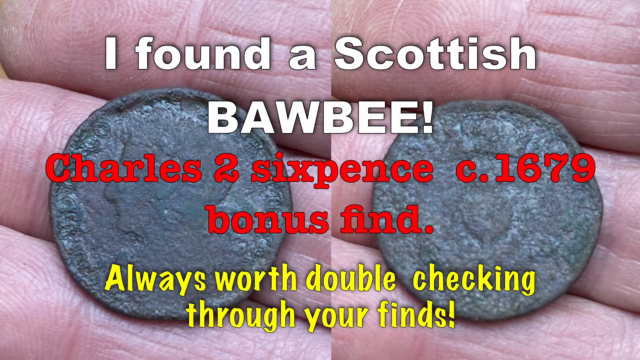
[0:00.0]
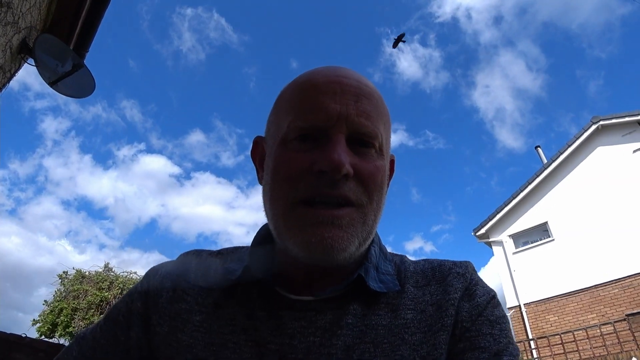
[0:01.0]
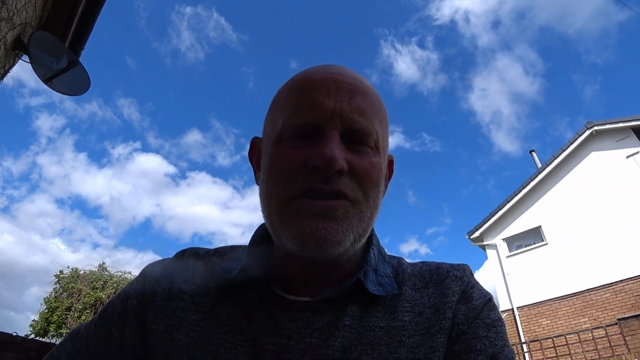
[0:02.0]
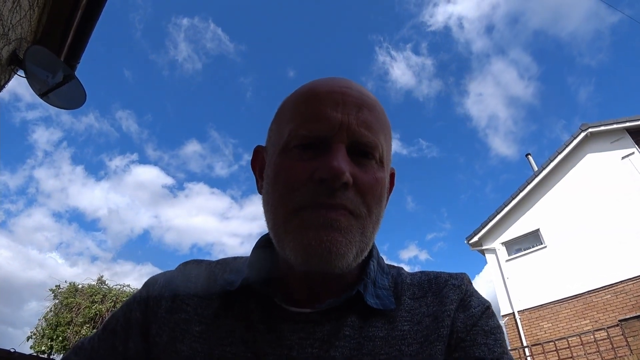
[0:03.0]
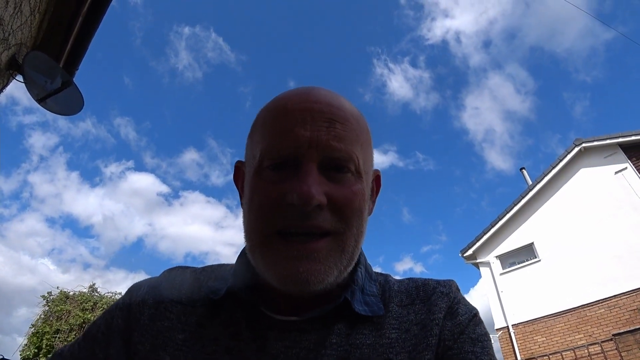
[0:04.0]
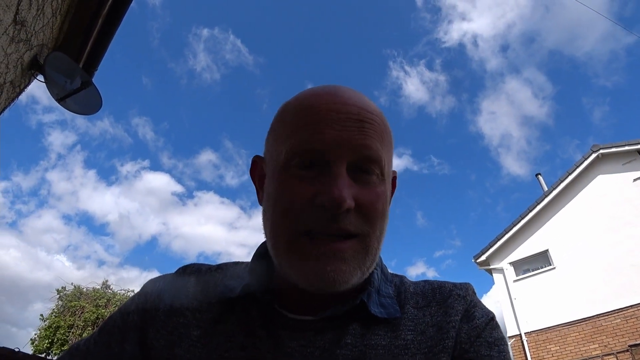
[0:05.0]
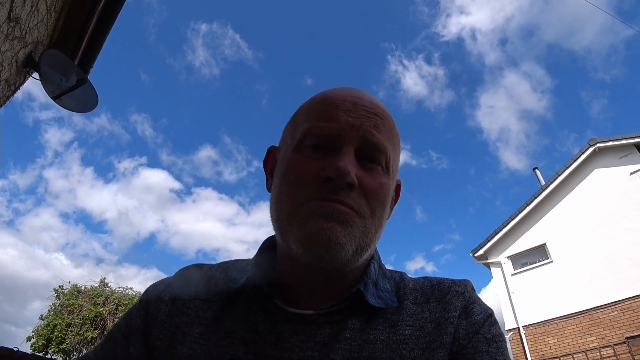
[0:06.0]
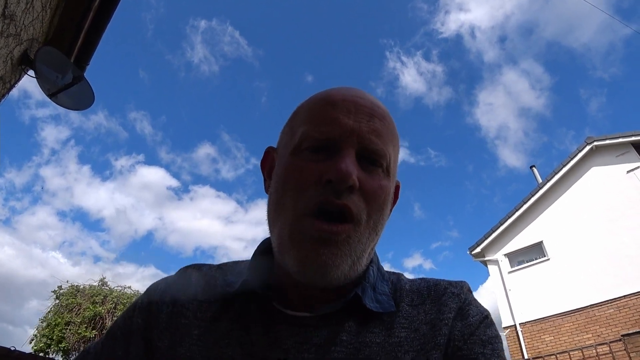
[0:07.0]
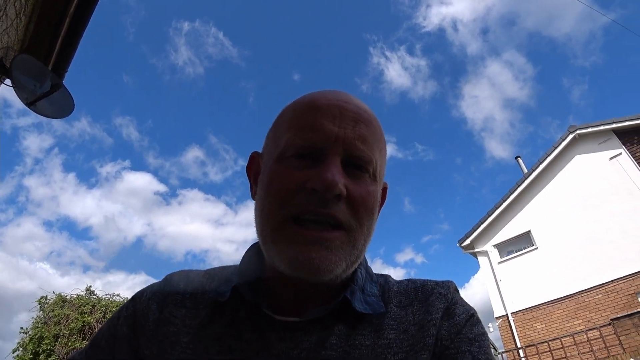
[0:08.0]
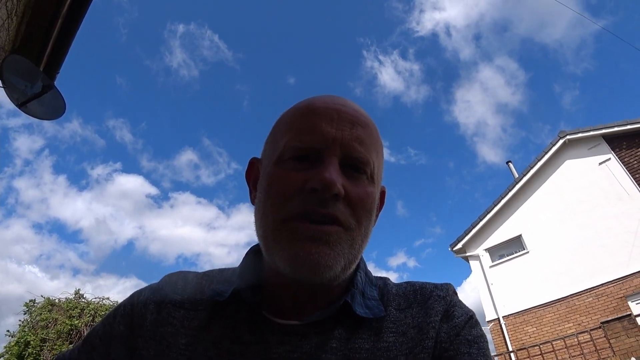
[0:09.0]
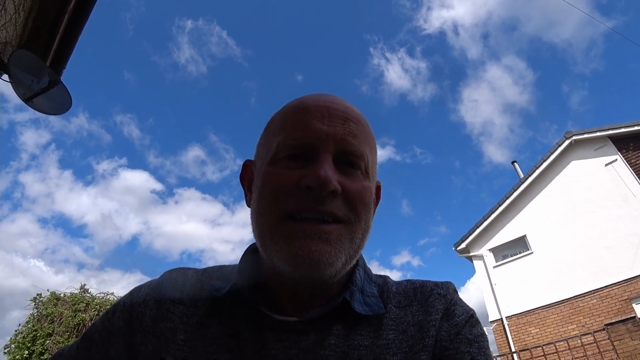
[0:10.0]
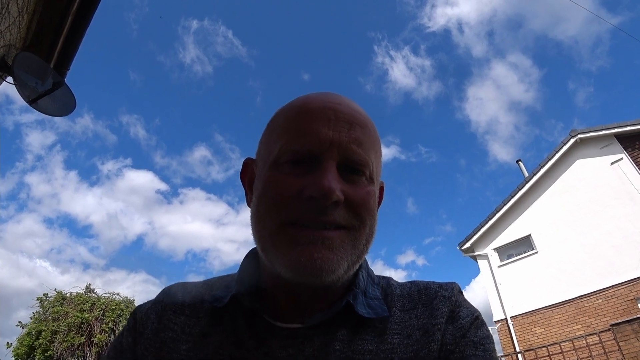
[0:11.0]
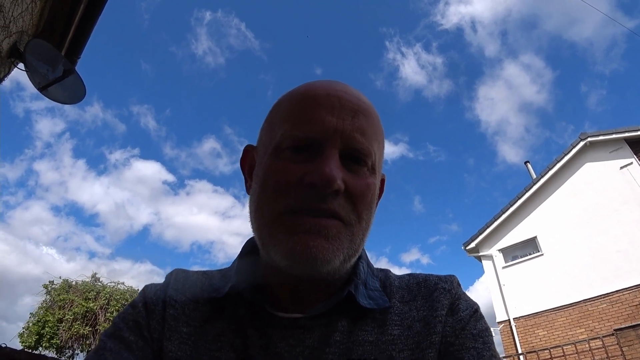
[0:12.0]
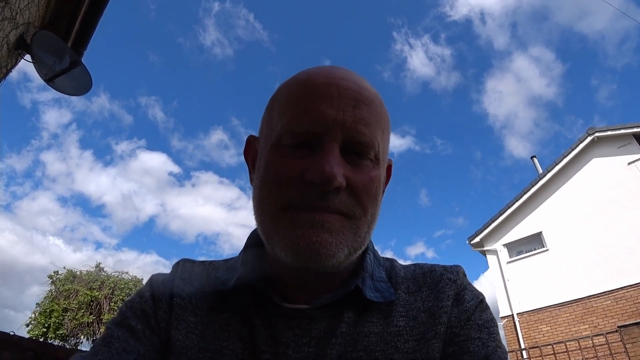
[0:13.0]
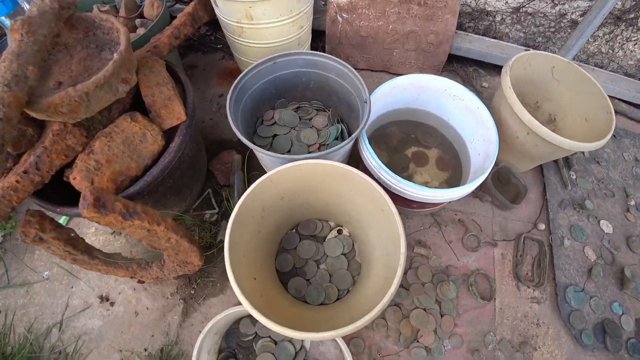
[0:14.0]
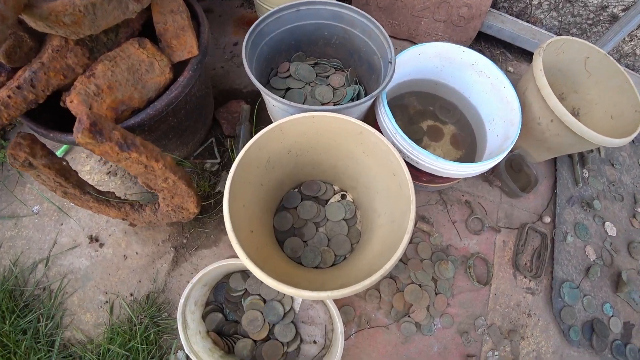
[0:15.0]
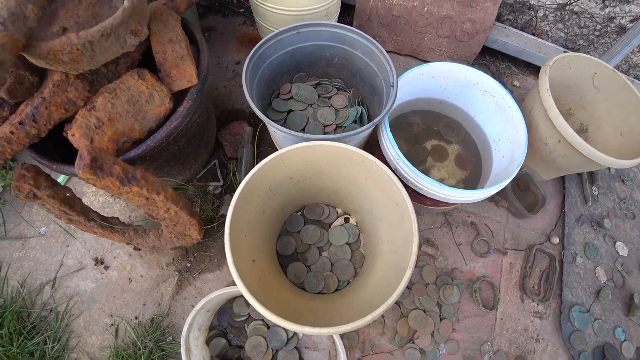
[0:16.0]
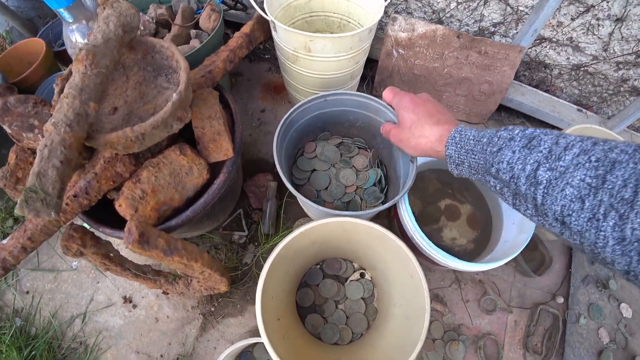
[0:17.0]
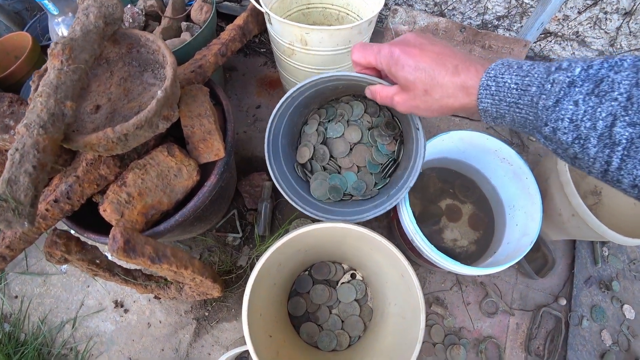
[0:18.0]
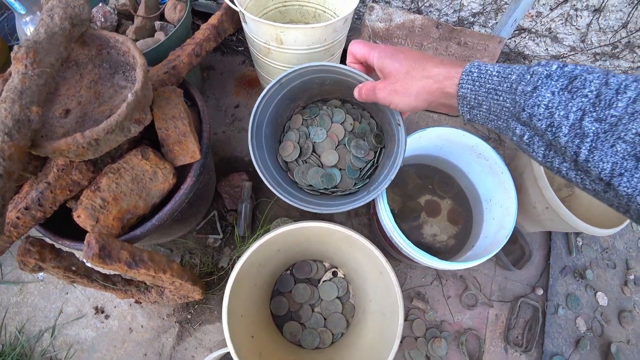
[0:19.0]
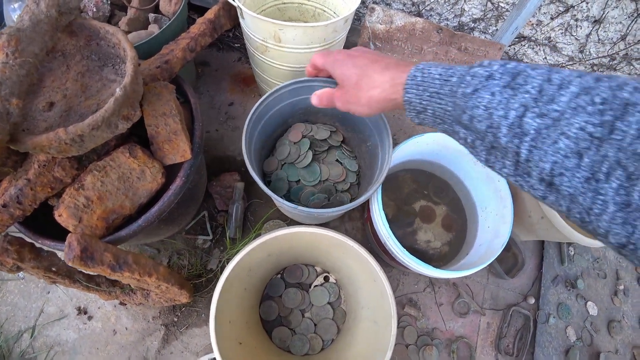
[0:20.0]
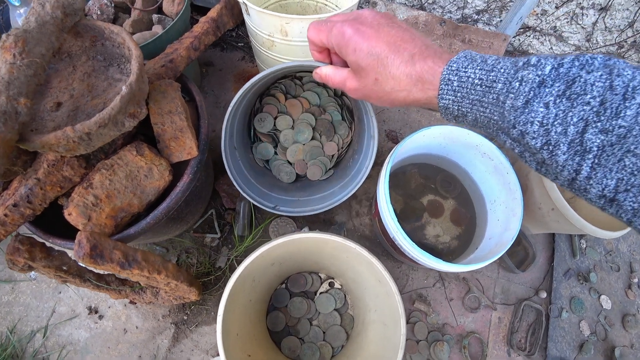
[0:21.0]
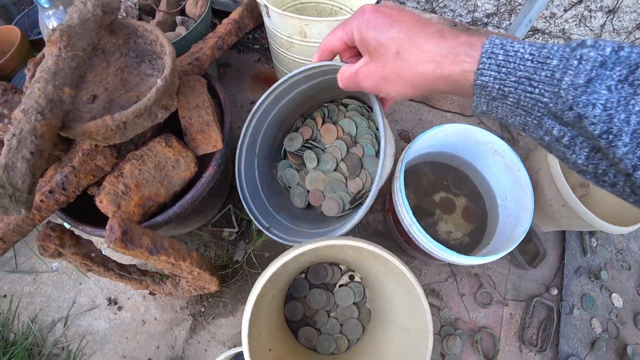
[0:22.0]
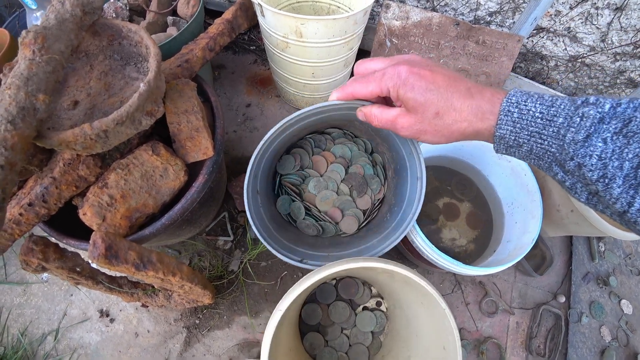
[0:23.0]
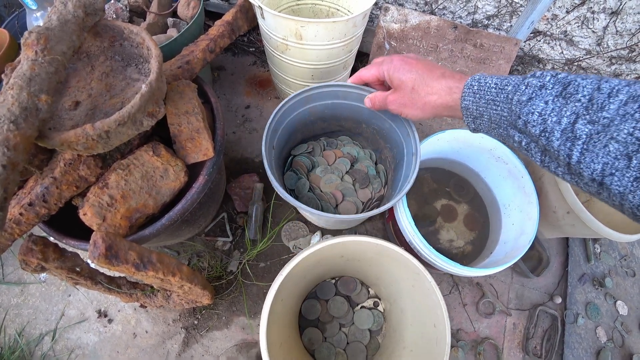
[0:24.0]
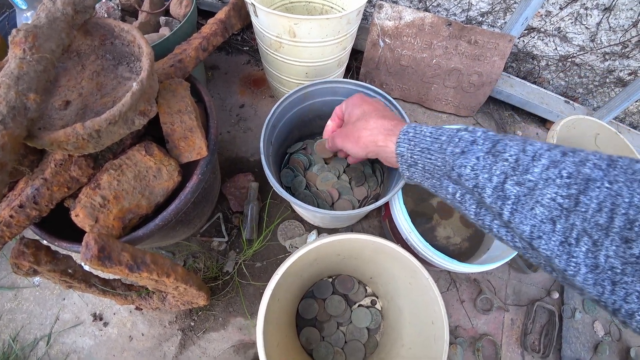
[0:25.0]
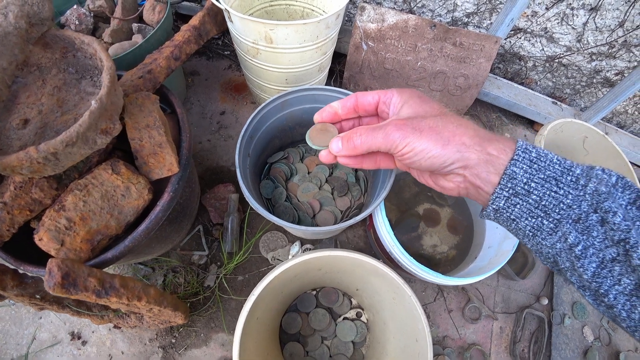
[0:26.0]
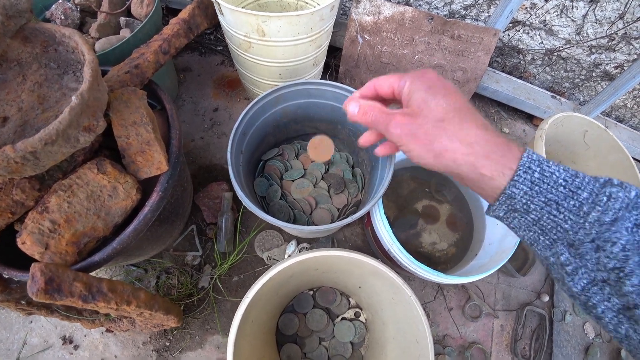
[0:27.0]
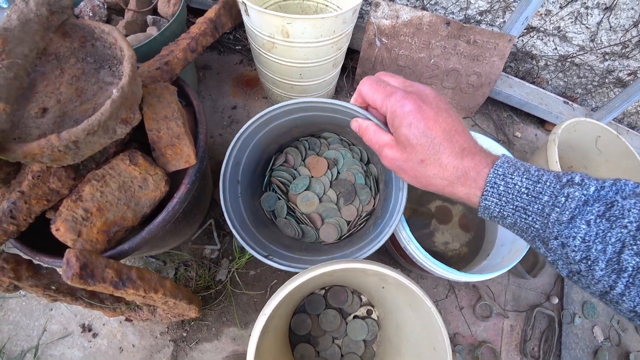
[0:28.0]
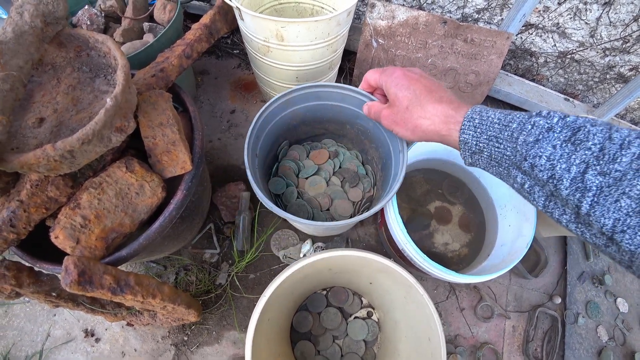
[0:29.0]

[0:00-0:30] The video is in colour and in landscape format. It opens with a close-up split screen of hands holding ancient coins that look as if they were dug up in an archaeological dig. Gaudy graphics are on the screen: the top line, in white, reads "I found a Scottish bawbee!"; below it, in red, "Charles II Sixpence circa 1679 bonus find"; and underneath, in yellow, "always worth double-checking through your finds!" The first shot of the man, apparently talking to the camera, is extremely underexposed because there is a white building behind him and a bright sky, so his face is in shadow. A bird flies over the top of his head, and a satellite dish is on the wall beside him. He talks to the camera in a selfie-style shot of very poor quality and exposure. Next, pots on the ground are filled with various old coins, along with a collection of horseshoes. A hand comes in, jiggles a load of old coins around, and shows some of them to the camera in slightly more detail.